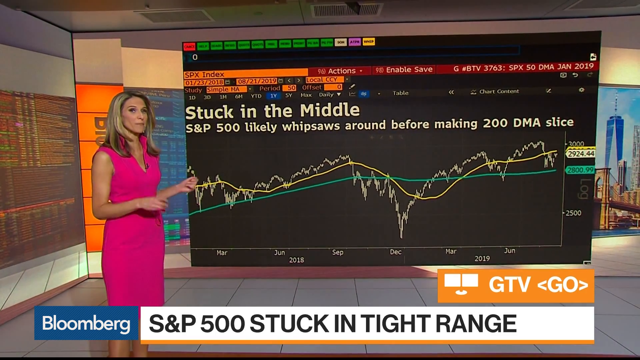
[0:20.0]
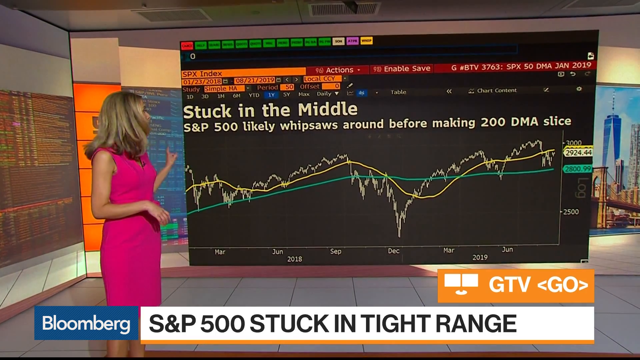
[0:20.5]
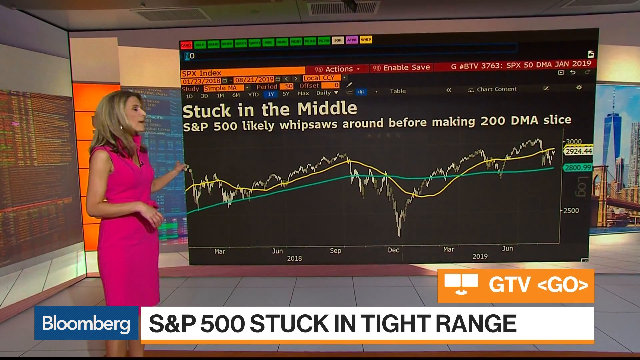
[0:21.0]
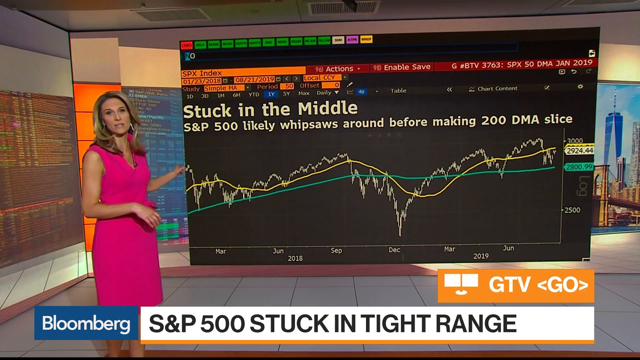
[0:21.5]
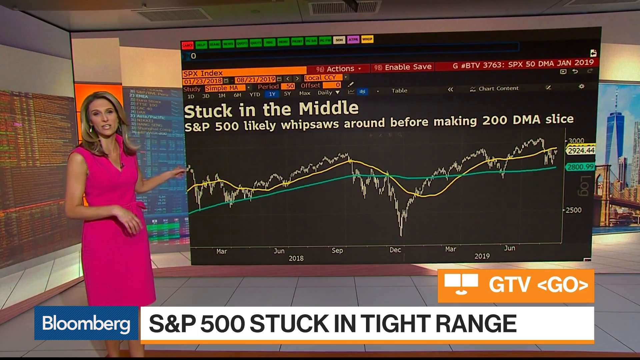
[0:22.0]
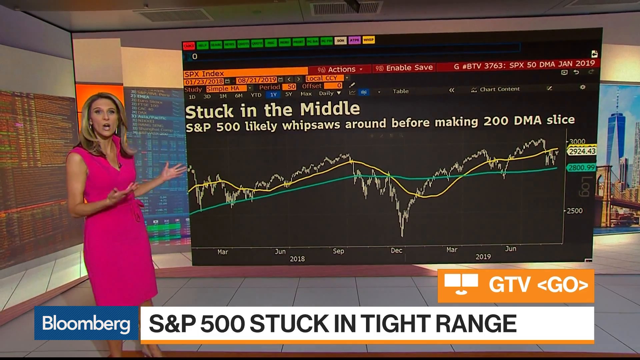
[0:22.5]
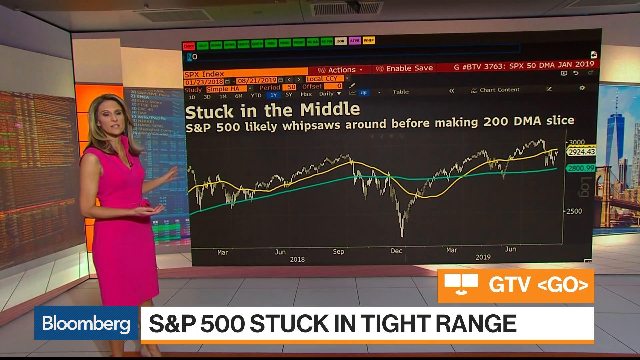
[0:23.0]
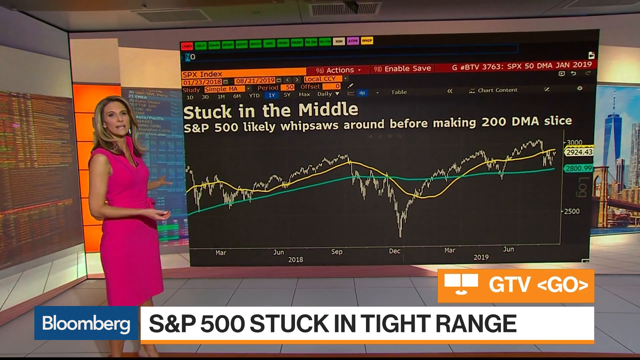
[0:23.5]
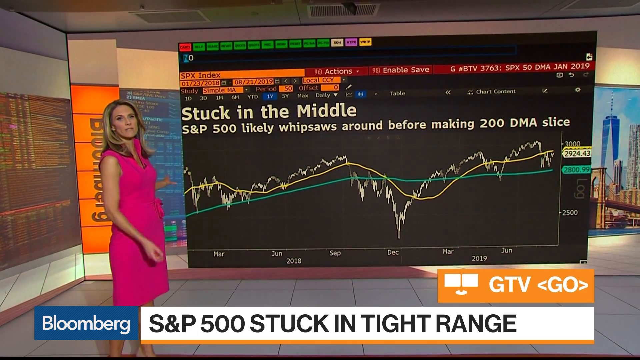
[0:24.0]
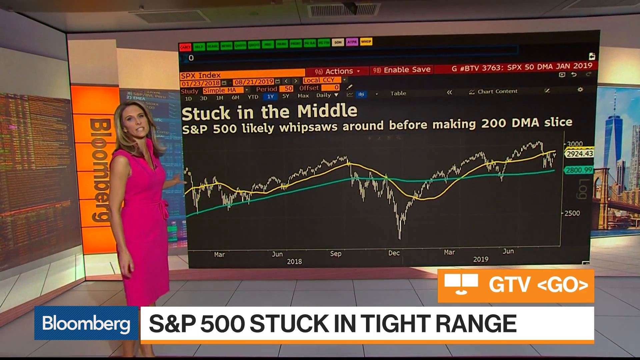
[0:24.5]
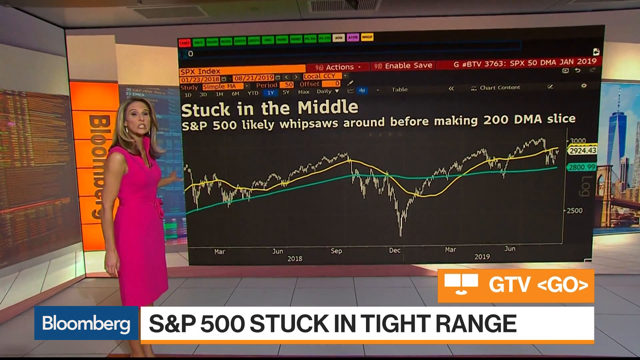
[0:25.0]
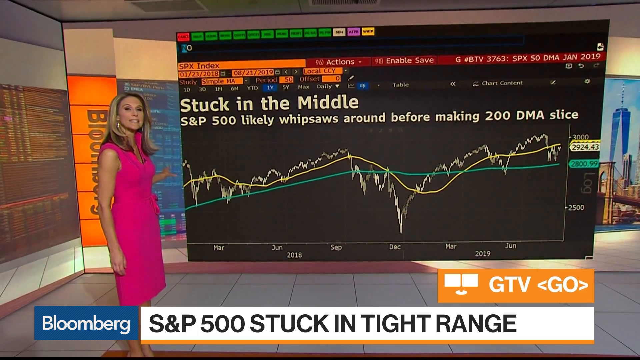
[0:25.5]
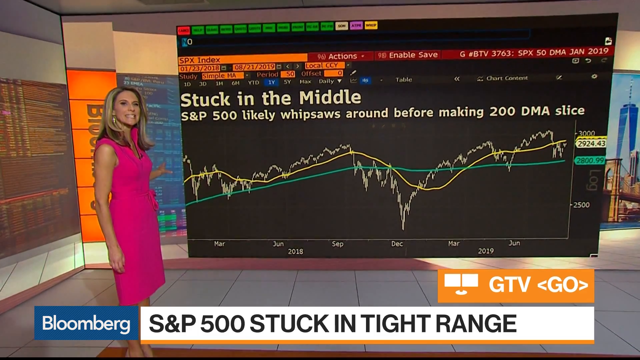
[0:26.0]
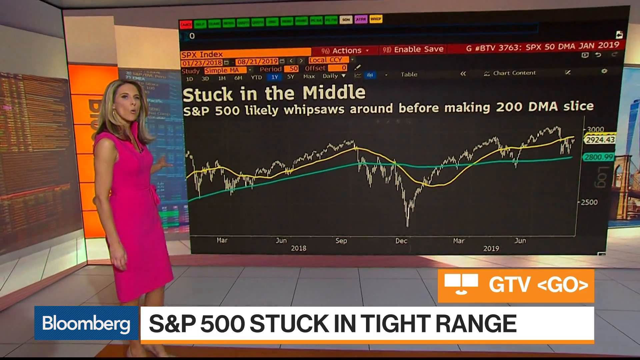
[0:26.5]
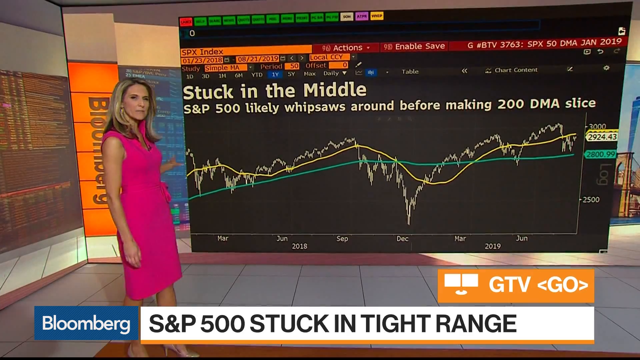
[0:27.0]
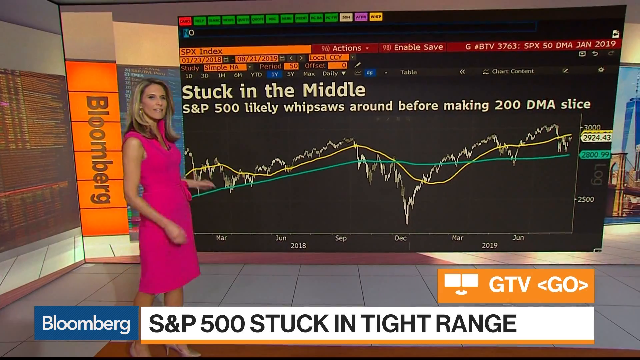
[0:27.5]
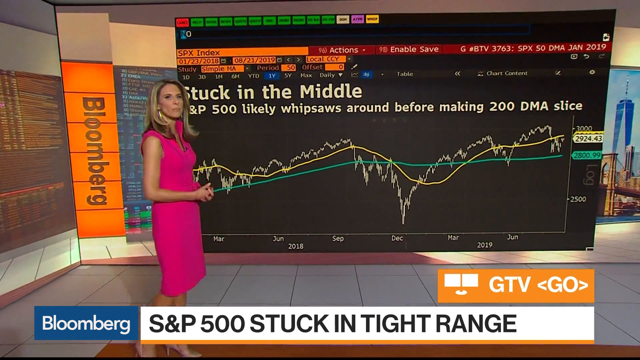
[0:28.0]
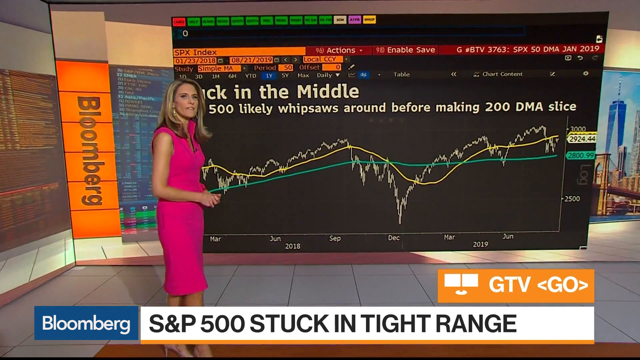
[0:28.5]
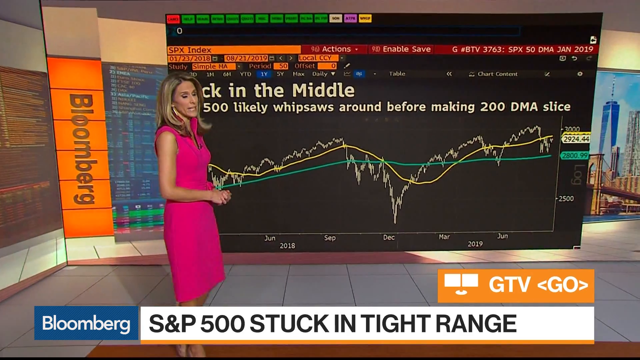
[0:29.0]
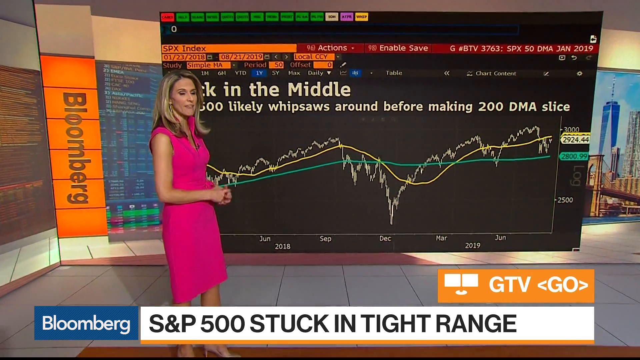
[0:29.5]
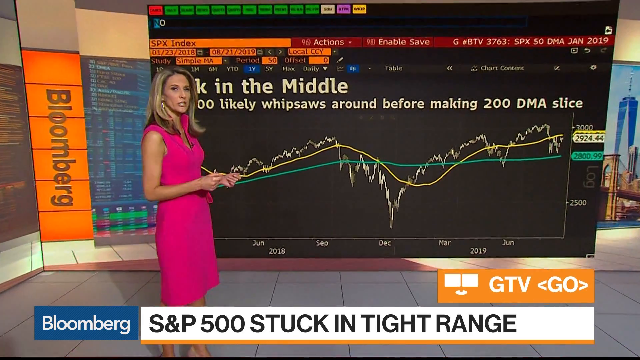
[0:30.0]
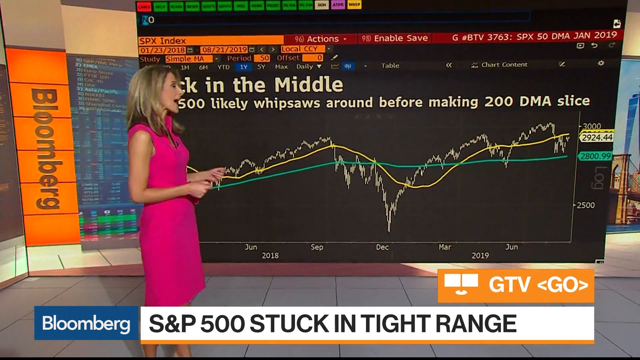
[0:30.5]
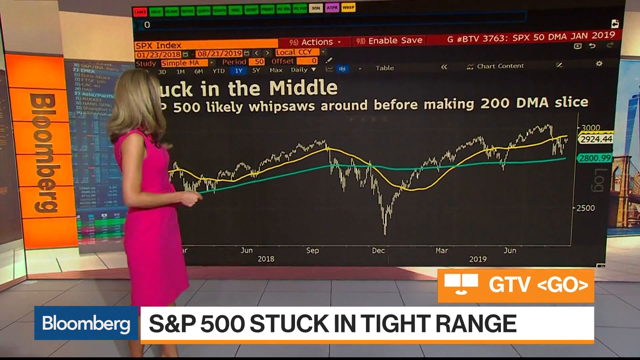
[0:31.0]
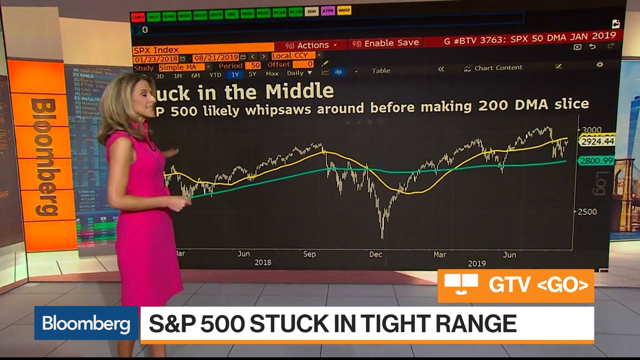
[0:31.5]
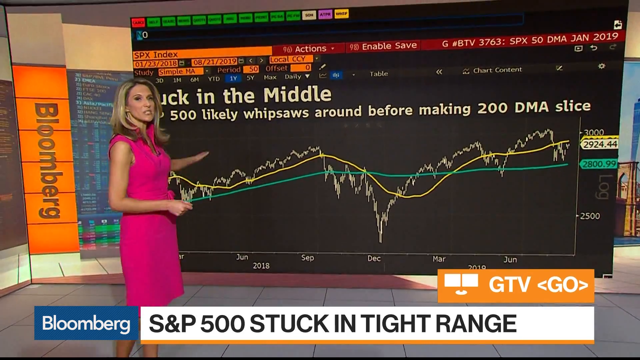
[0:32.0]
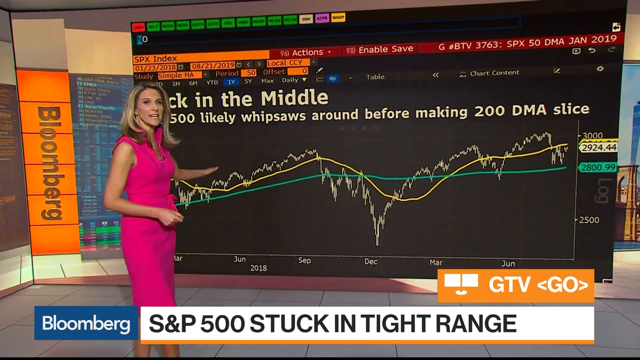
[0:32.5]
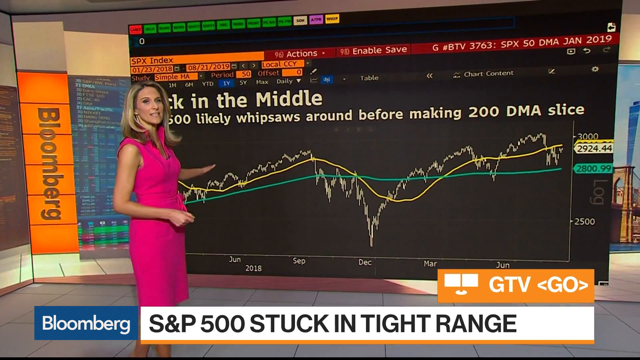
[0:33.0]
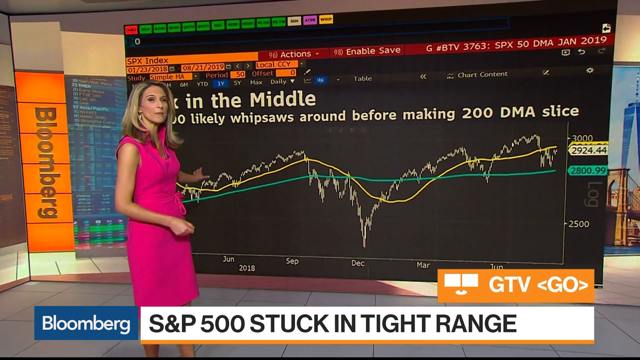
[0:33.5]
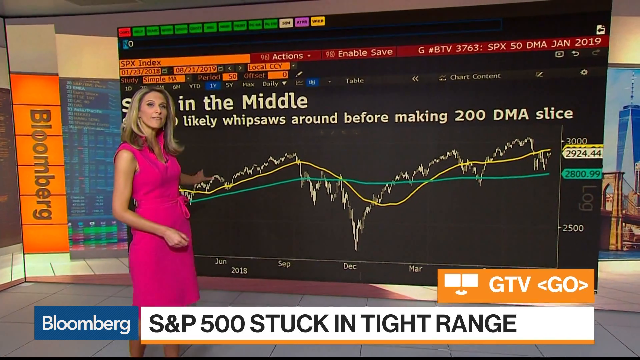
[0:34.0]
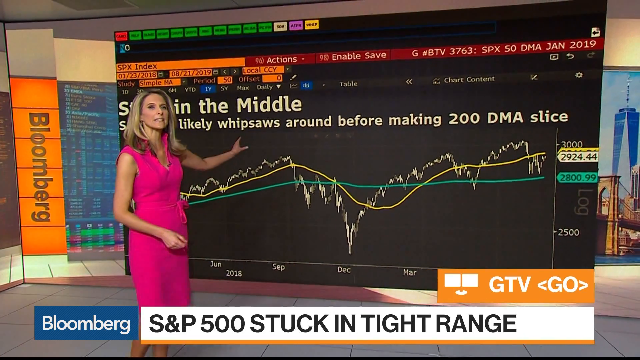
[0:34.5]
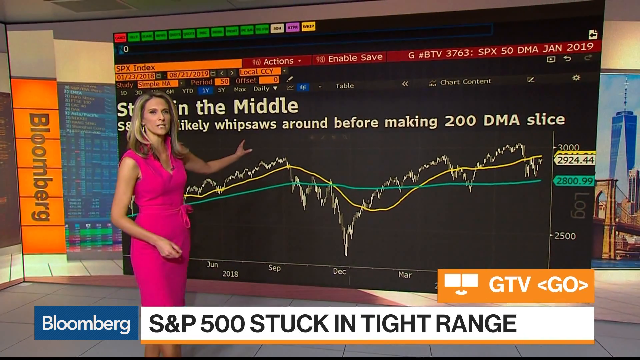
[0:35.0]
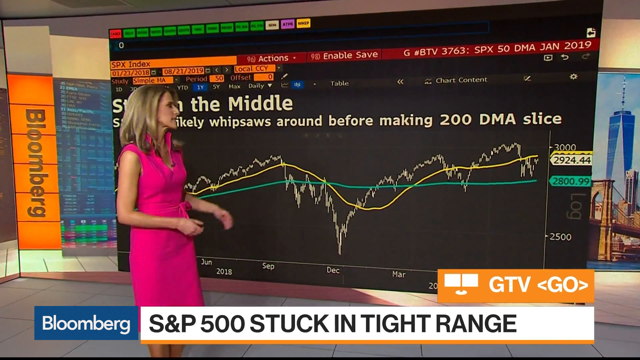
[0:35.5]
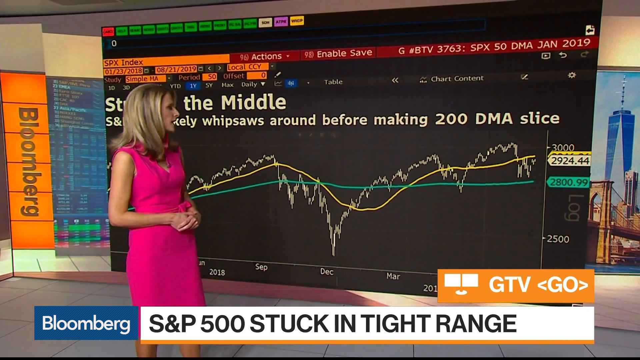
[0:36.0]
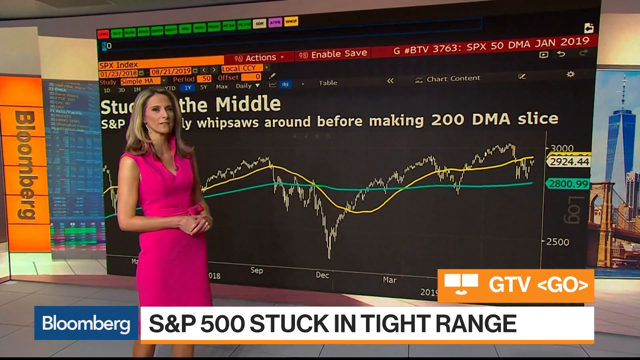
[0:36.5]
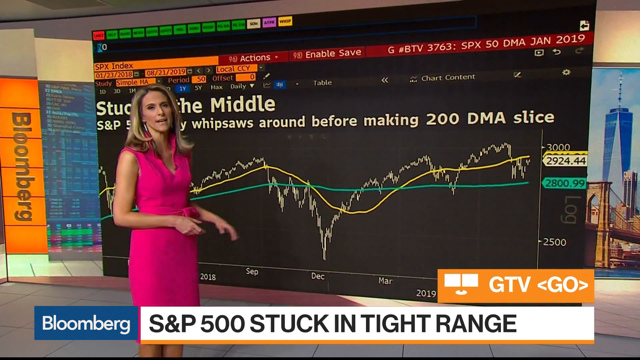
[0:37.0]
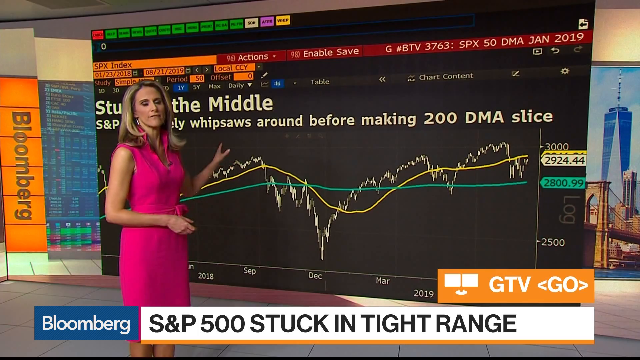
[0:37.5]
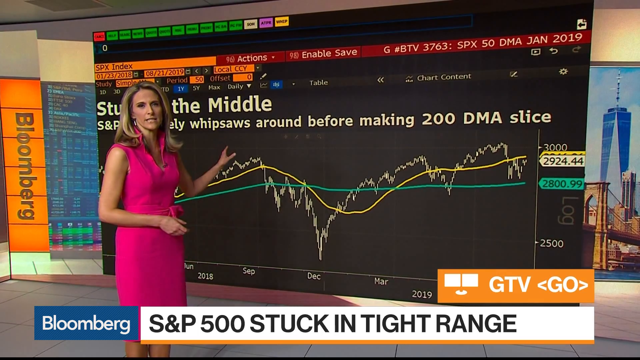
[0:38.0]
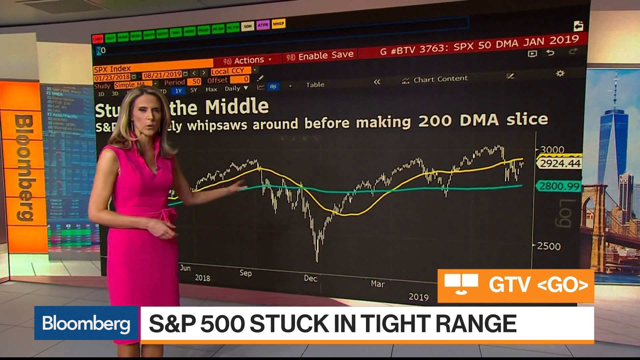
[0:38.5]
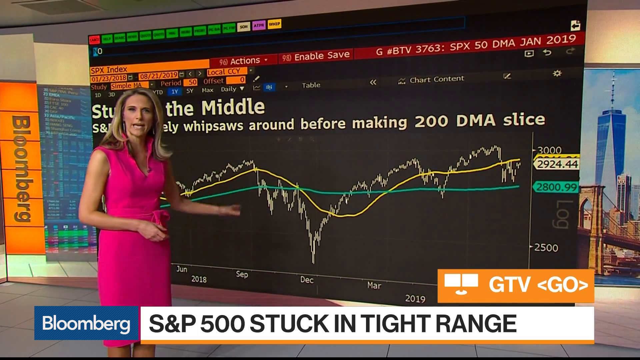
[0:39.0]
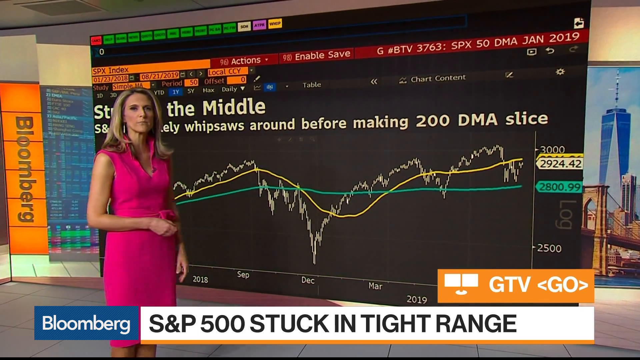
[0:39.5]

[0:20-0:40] The presenter in the studio moves closer to the screen, which shows different flows of the stock. Pictures of buildings are reflected in the background on the wall. A chart of the stock is marked with March, June 2018, September, December, and March, June 2019.